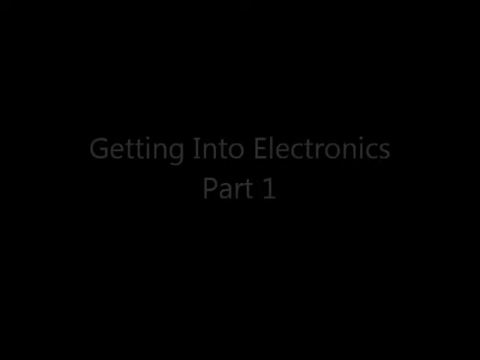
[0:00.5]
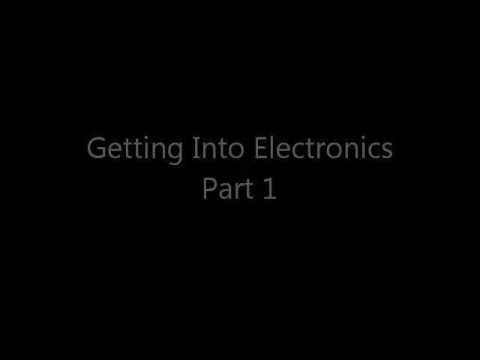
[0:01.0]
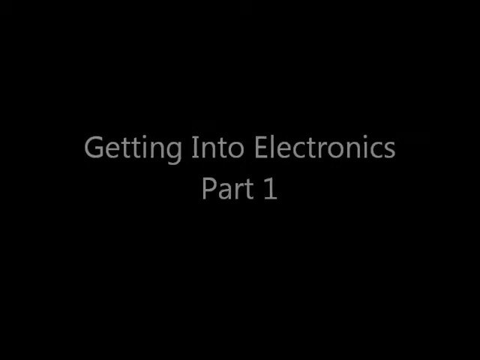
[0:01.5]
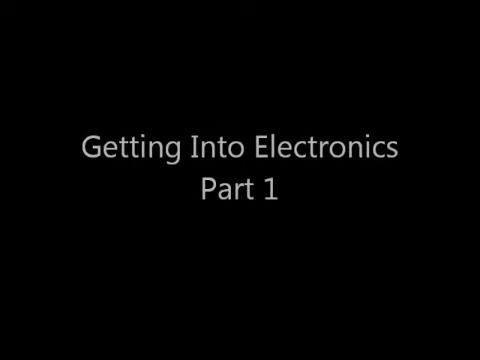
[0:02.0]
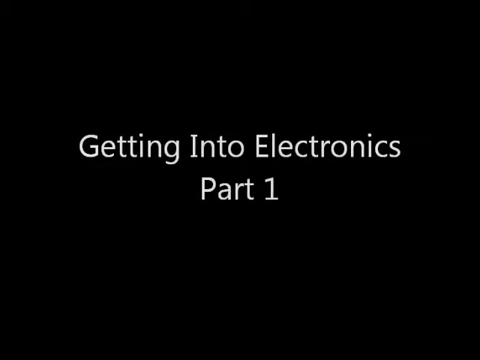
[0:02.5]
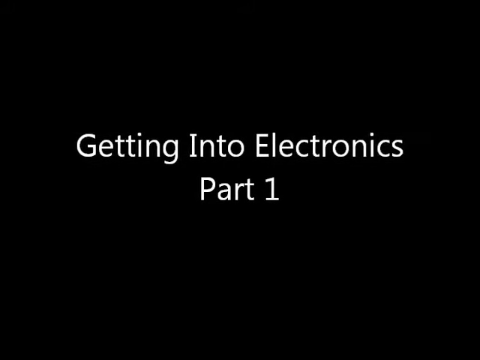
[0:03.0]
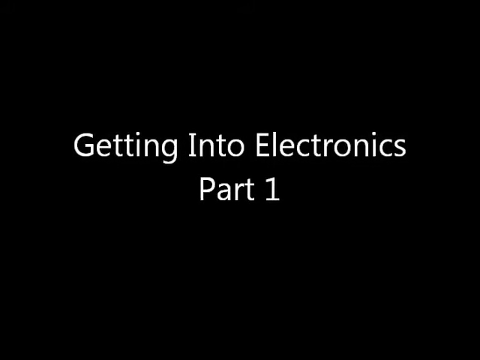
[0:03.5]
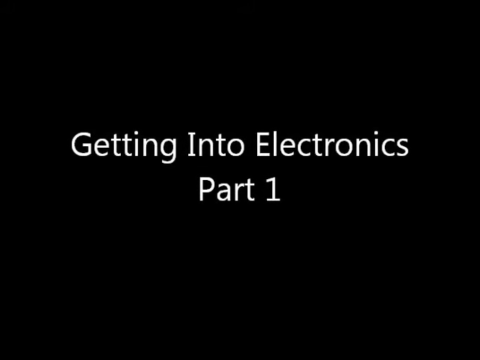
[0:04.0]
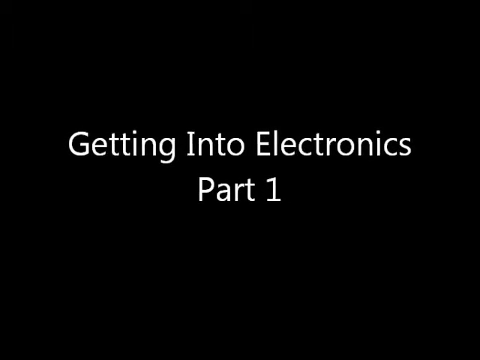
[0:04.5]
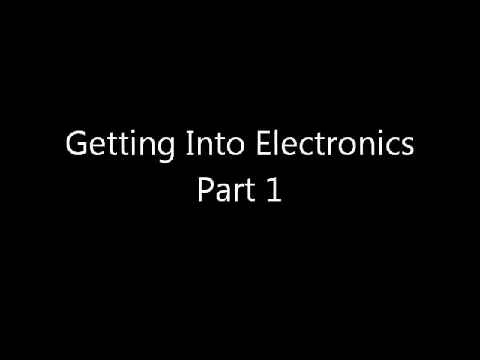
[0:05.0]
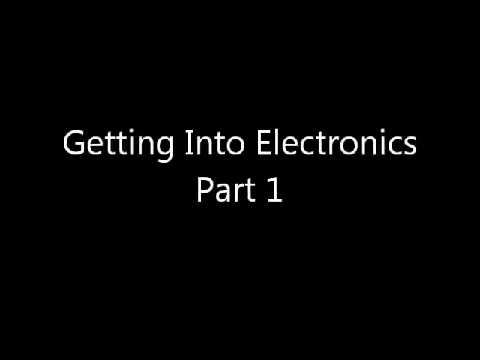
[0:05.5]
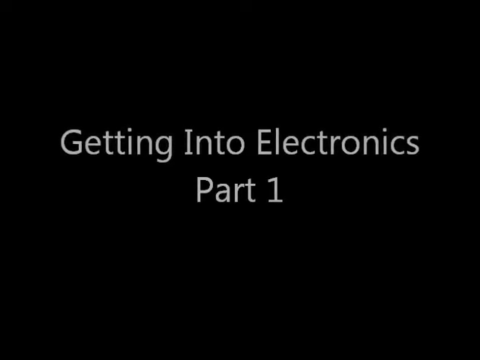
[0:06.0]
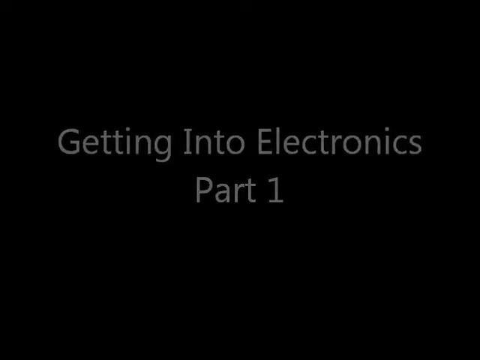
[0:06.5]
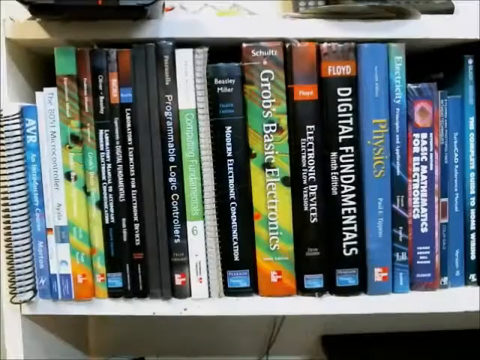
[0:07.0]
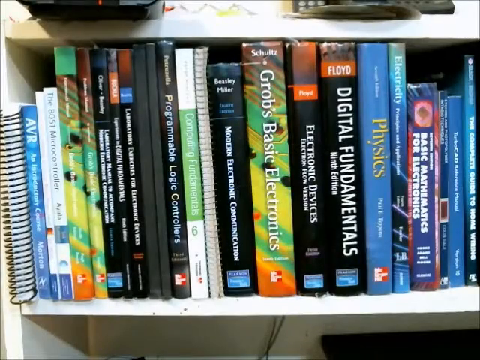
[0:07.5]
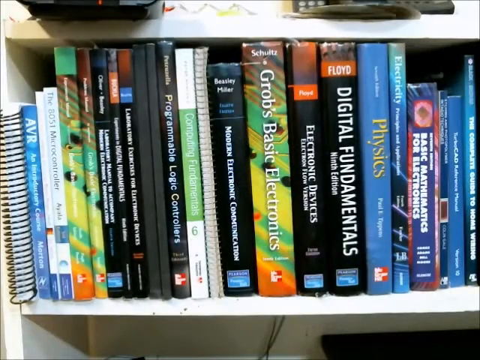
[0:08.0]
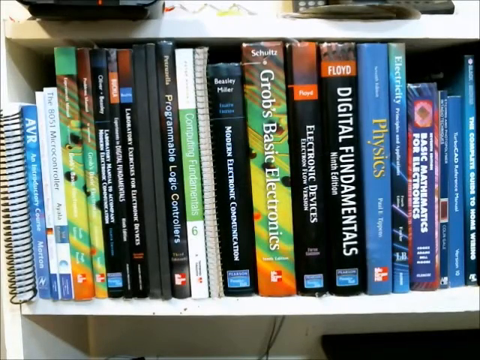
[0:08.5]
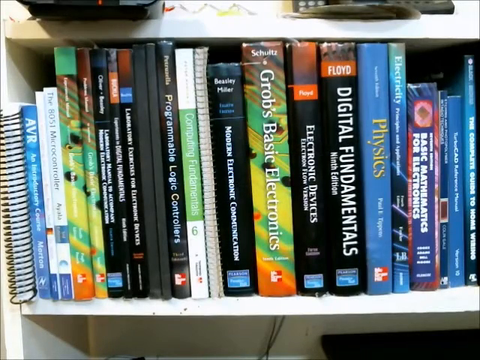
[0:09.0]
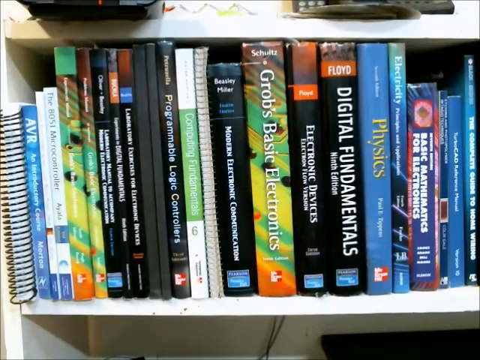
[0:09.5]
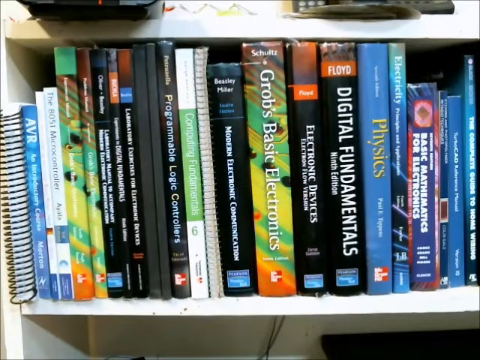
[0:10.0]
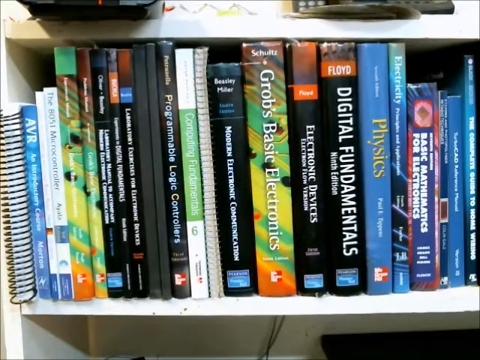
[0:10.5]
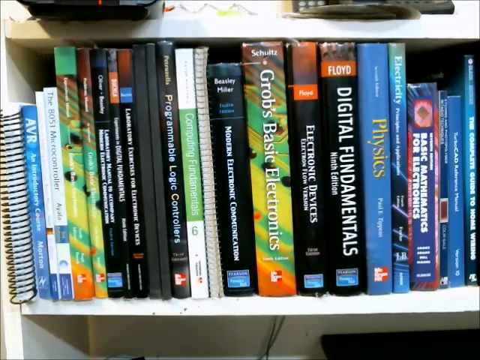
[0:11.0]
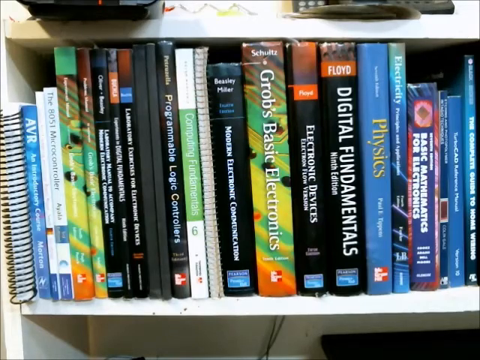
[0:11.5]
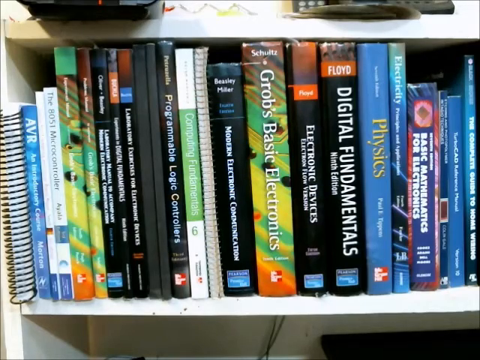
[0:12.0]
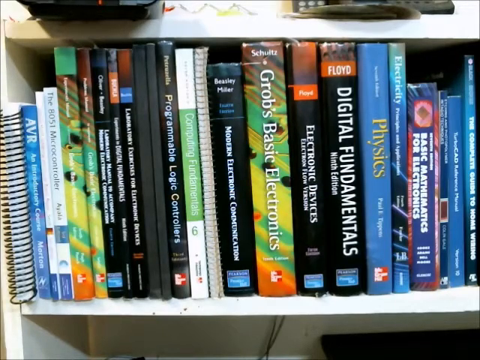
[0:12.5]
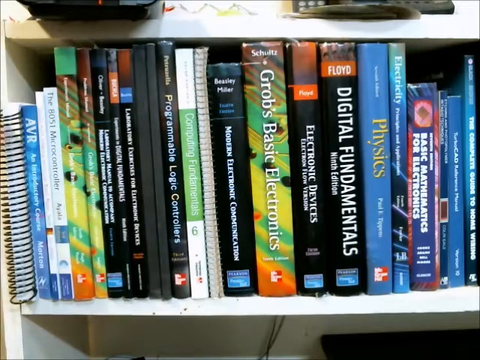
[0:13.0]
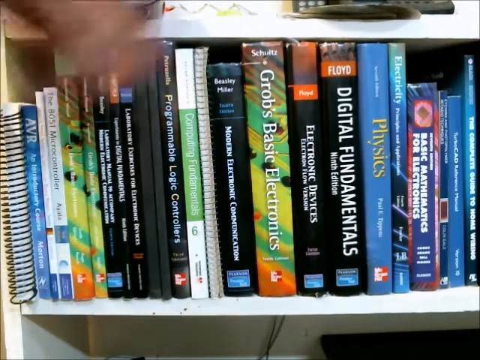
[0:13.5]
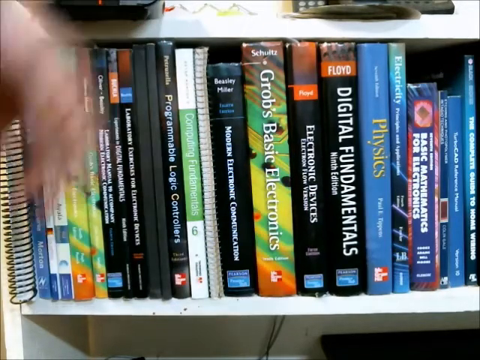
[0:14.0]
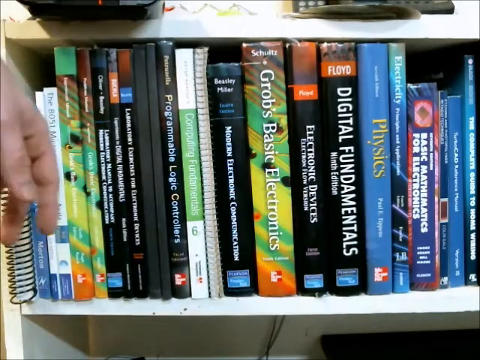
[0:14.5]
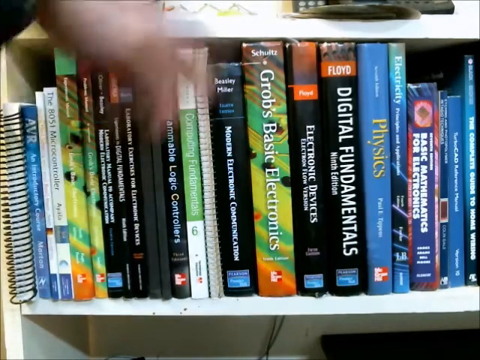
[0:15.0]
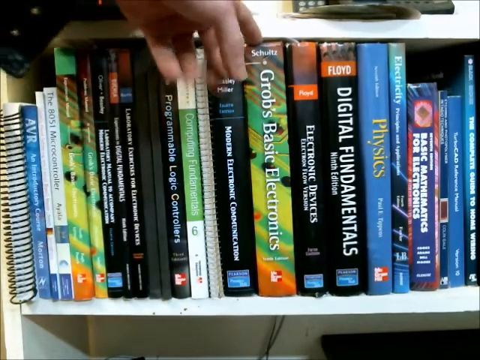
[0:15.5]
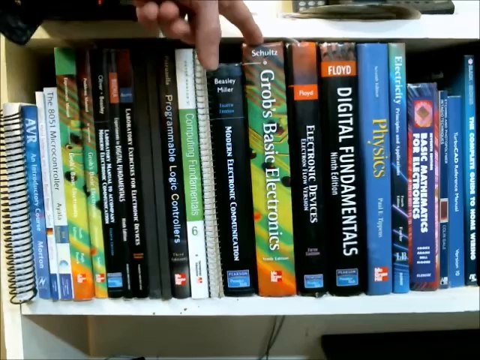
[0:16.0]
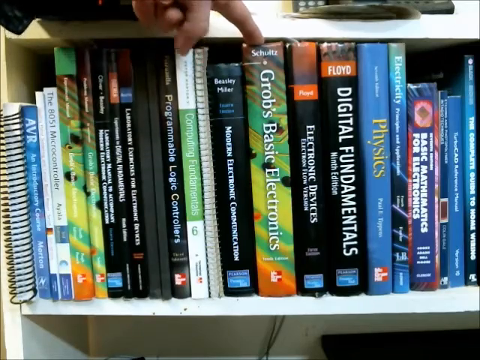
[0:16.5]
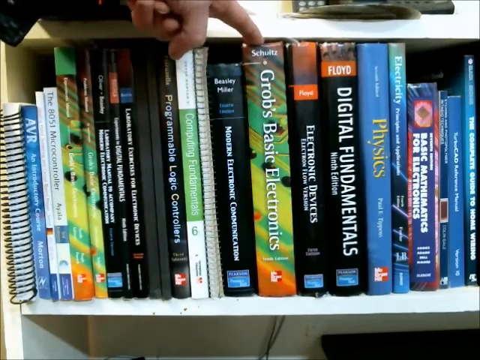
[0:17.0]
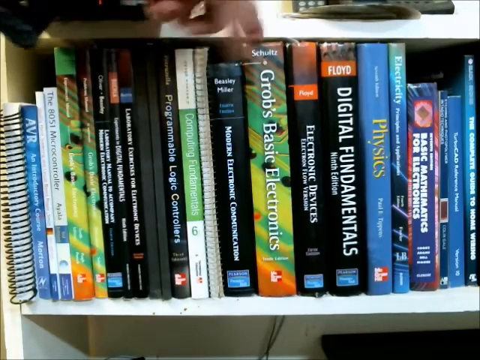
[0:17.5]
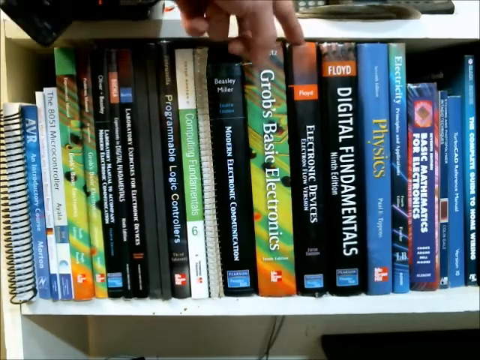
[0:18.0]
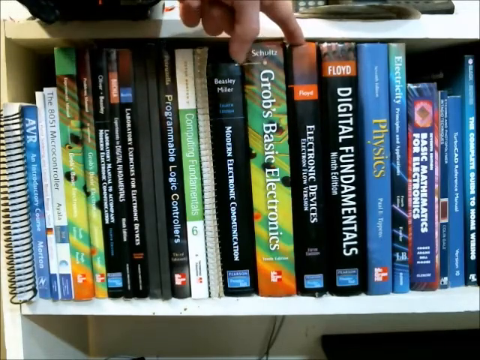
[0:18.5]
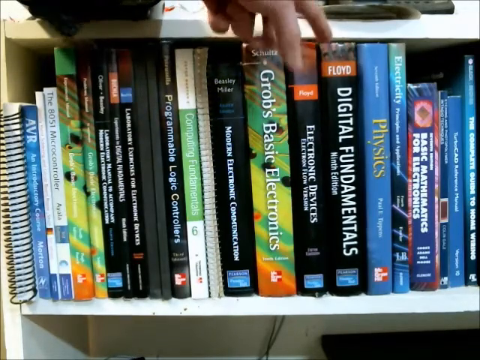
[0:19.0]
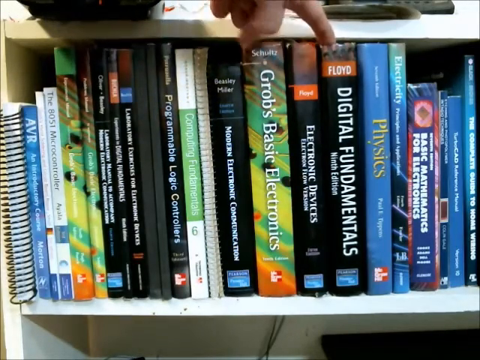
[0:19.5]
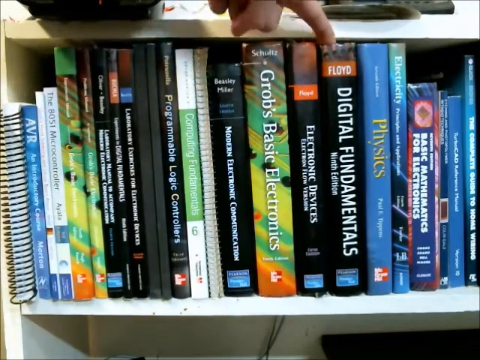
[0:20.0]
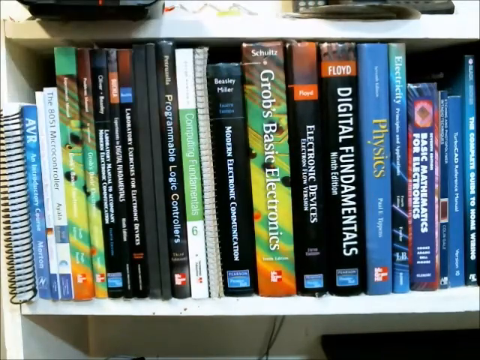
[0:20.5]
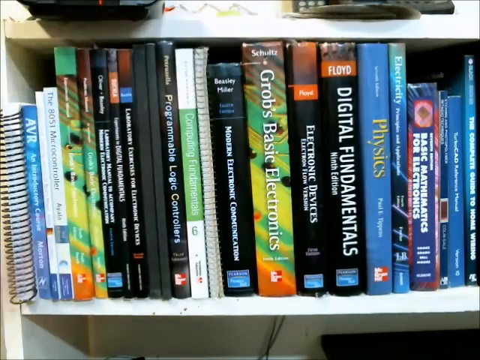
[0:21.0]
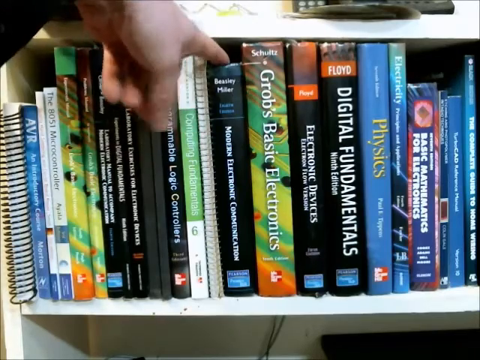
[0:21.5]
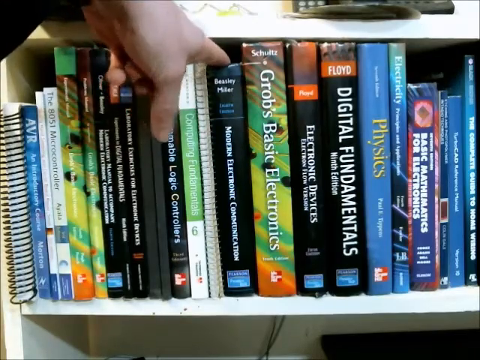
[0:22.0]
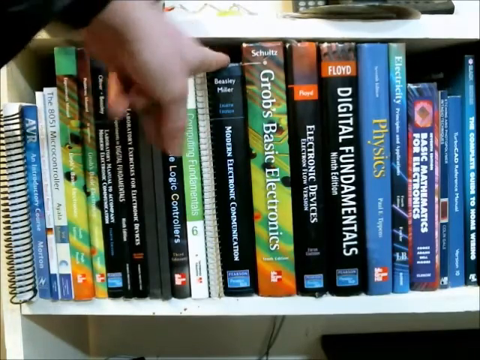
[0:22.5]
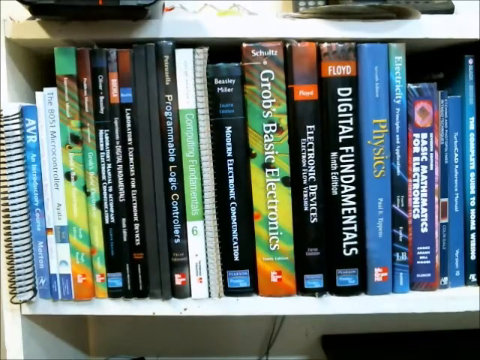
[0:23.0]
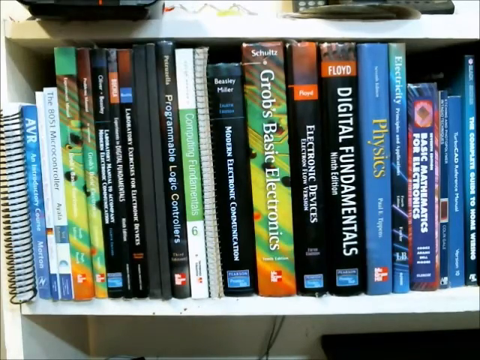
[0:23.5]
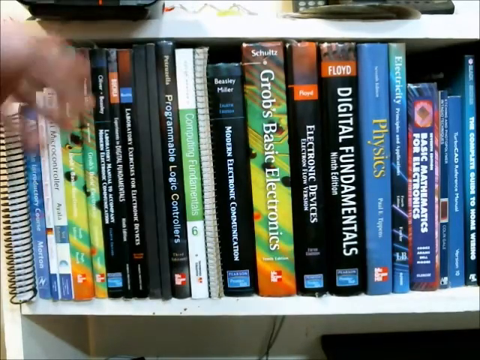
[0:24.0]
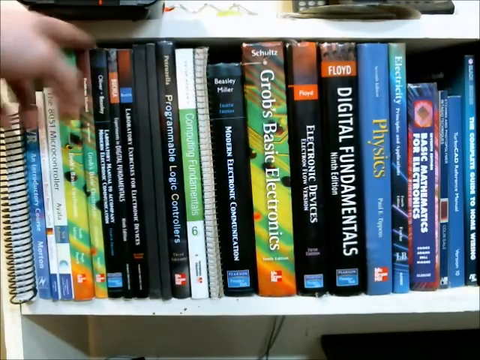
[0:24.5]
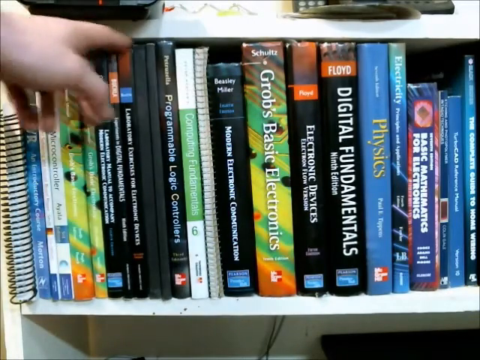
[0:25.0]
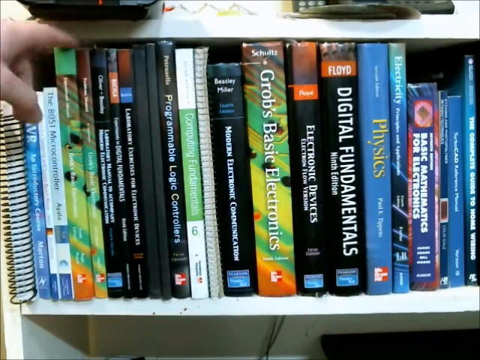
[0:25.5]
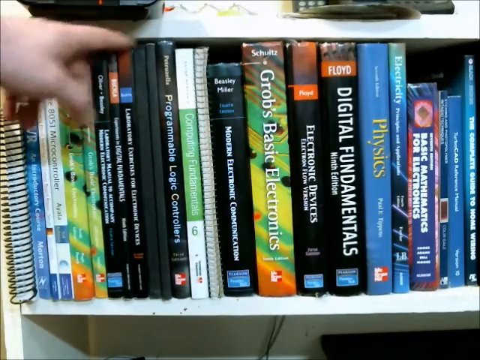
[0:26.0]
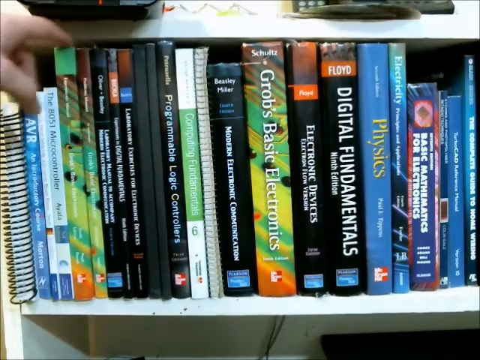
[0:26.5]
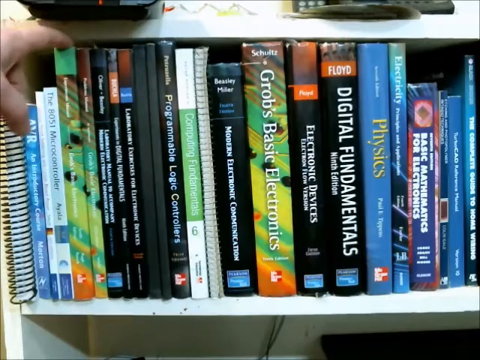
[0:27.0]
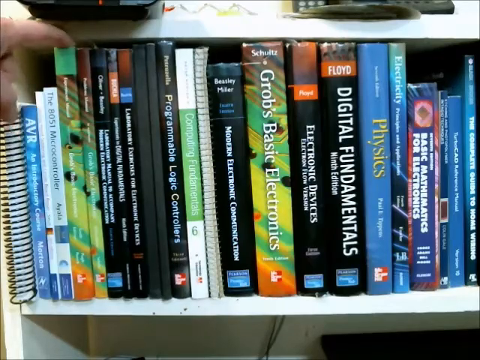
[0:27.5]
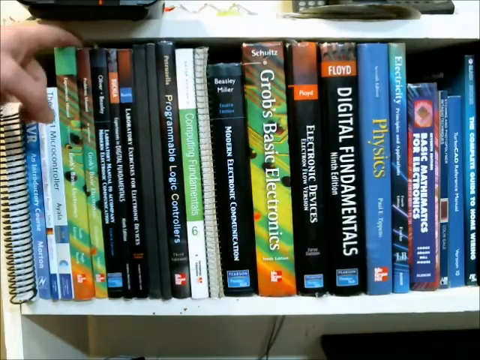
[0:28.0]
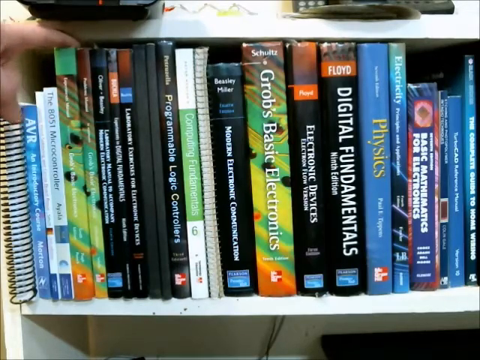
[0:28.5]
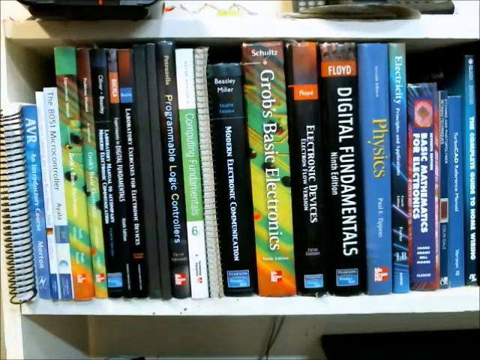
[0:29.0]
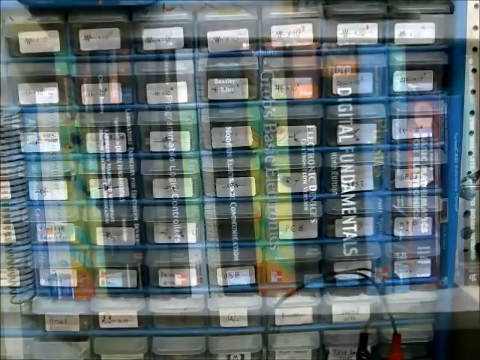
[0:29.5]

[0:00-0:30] The video opens on a black screen, and then text appears reading "getting into electronics part one." The next shot shows a row of books; from left to right, the readable titles include "programmable logic controllers," "Grove's basic electronics," "electronic devices," "digital fundamentals" and "physics." A hand, apparently the left hand, comes in and points at the books: first "Grove's basic electronics," then "electronic devices" and "digital fundamentals." It then goes back and taps the one that says "electronic communication," and rubs along the other books on the left side. A shot of little cubbyholes appears, and then the screen goes back to black.